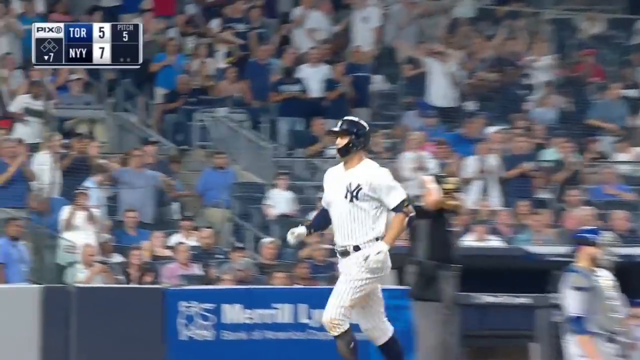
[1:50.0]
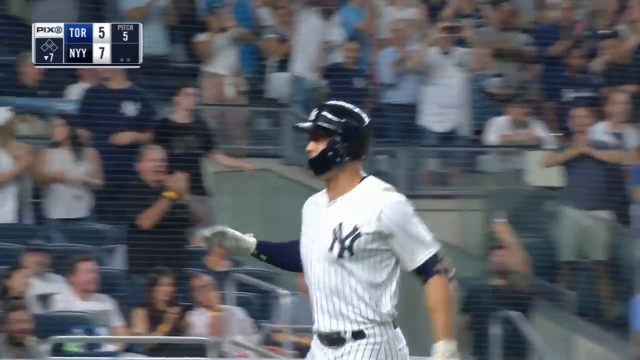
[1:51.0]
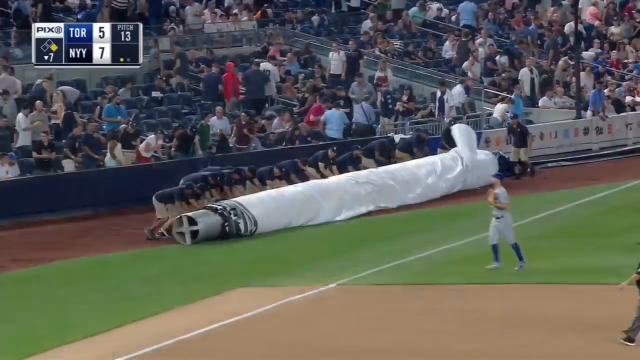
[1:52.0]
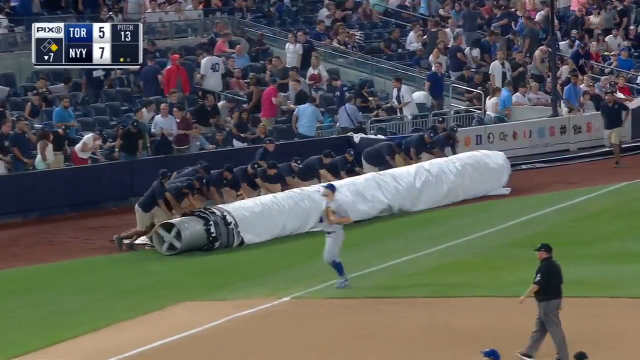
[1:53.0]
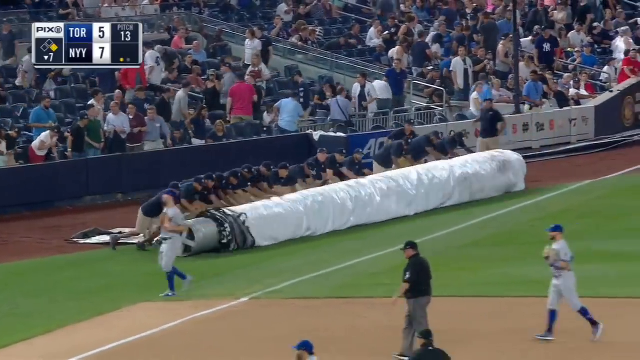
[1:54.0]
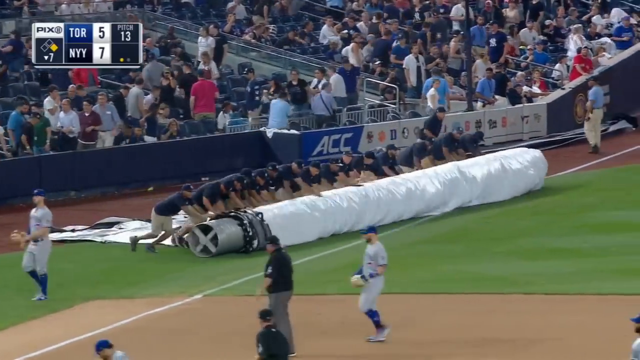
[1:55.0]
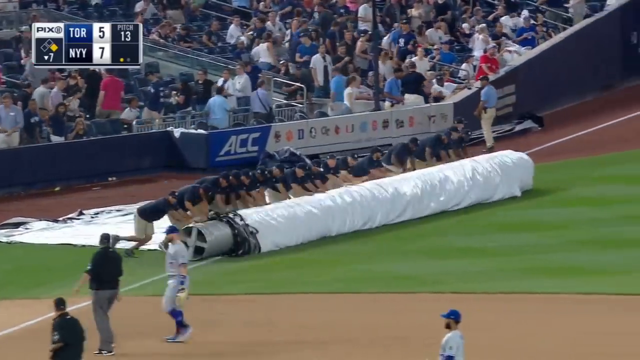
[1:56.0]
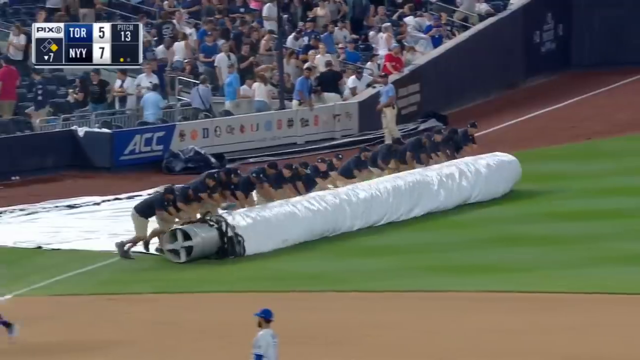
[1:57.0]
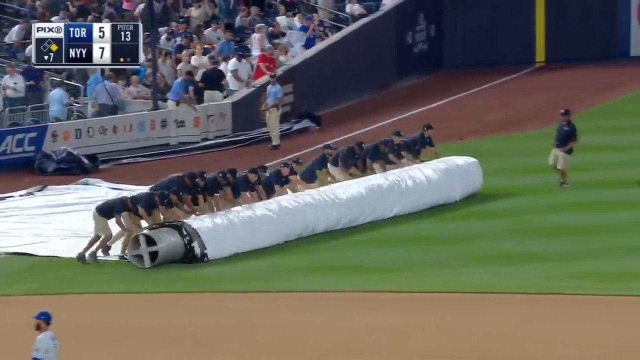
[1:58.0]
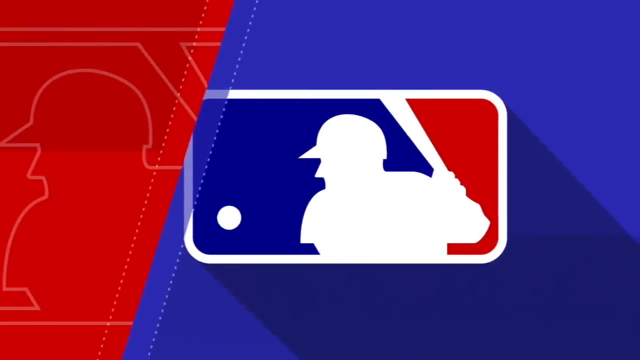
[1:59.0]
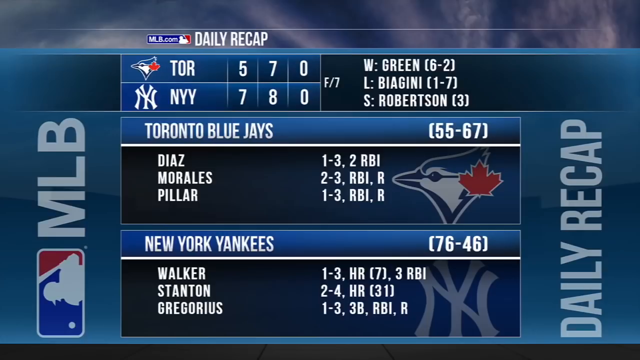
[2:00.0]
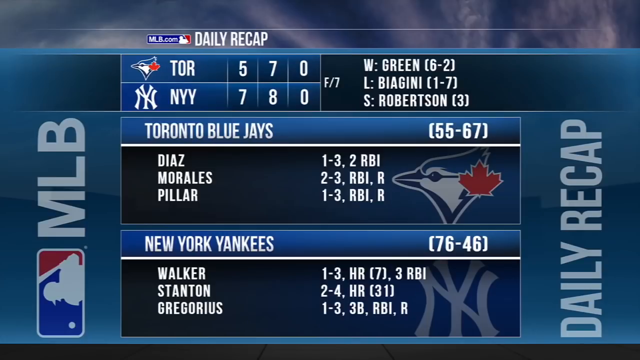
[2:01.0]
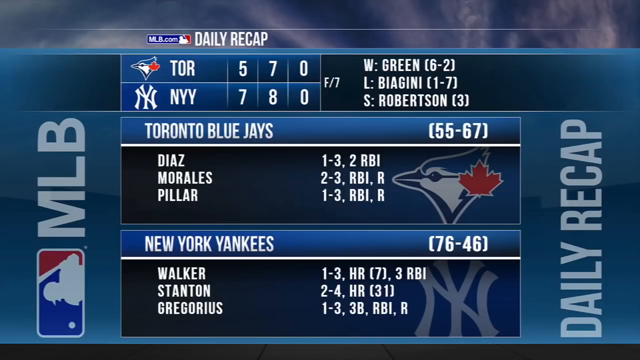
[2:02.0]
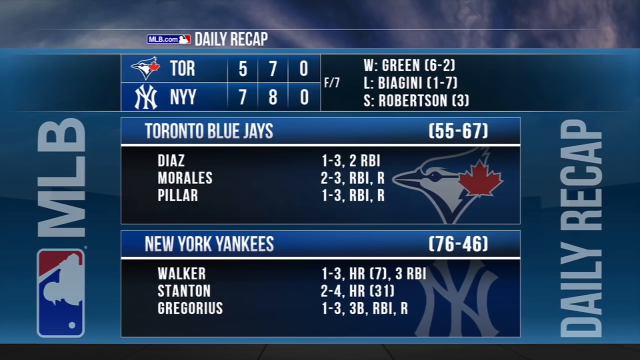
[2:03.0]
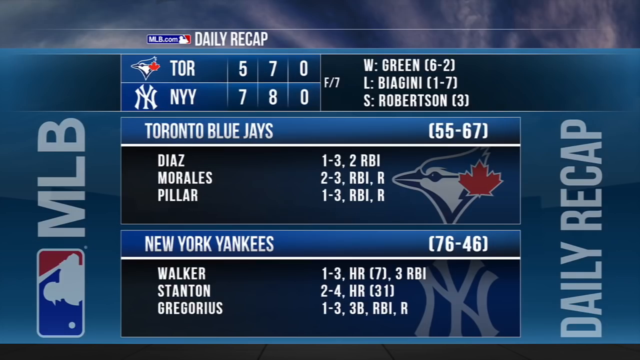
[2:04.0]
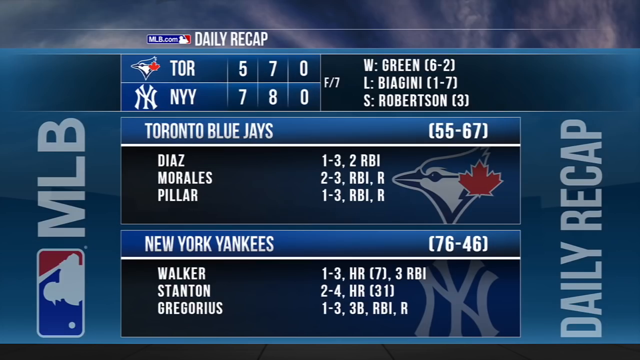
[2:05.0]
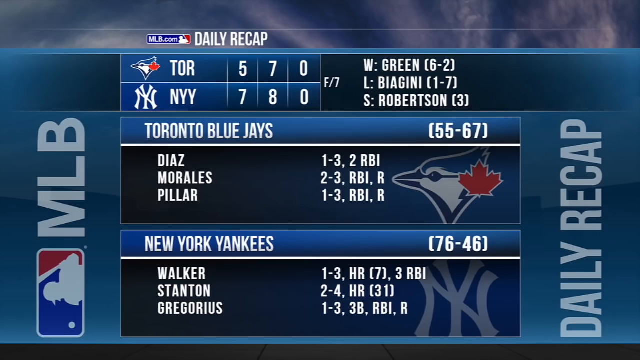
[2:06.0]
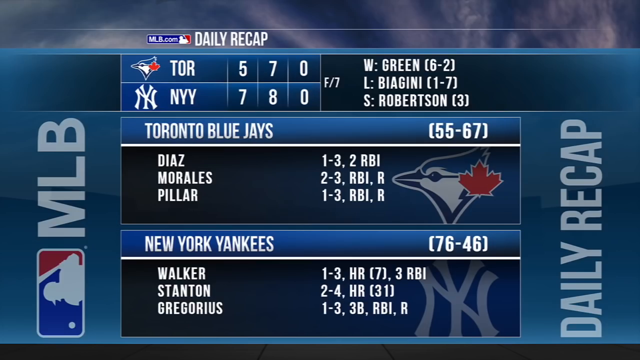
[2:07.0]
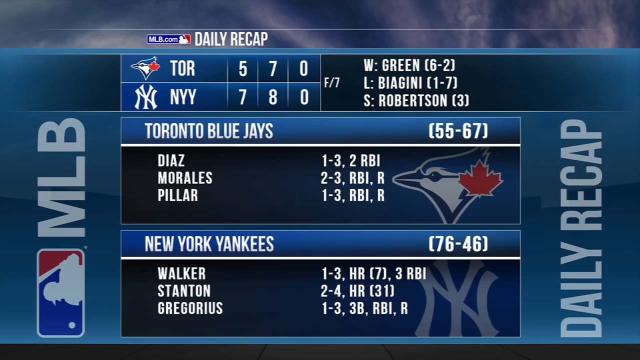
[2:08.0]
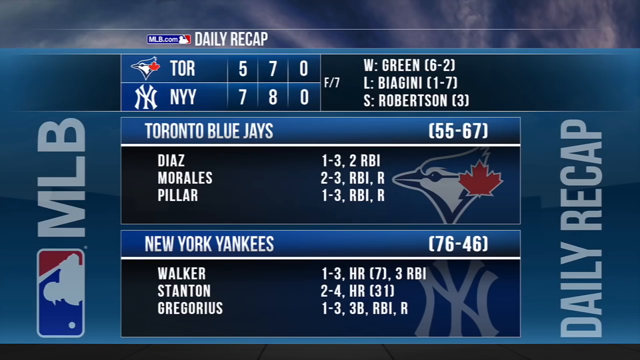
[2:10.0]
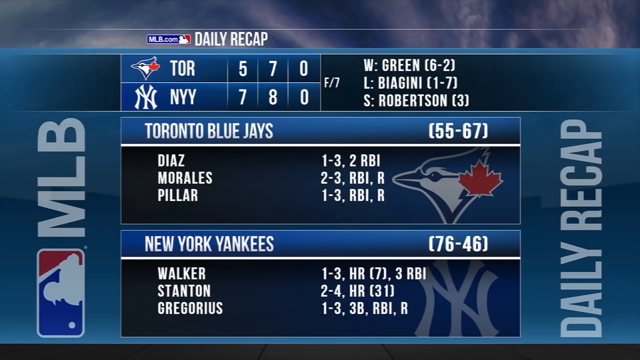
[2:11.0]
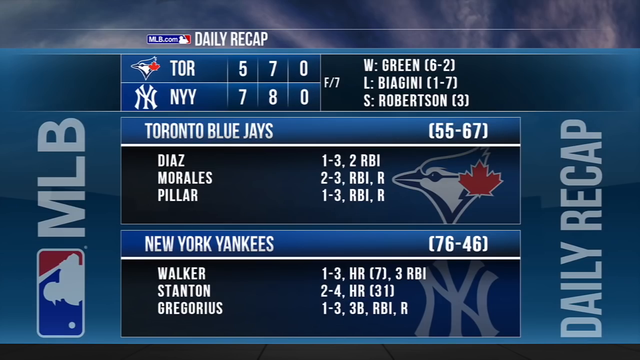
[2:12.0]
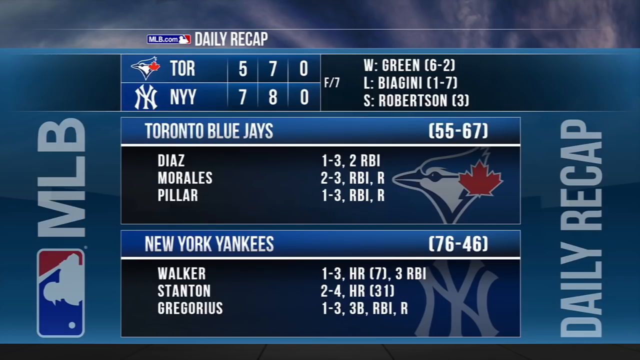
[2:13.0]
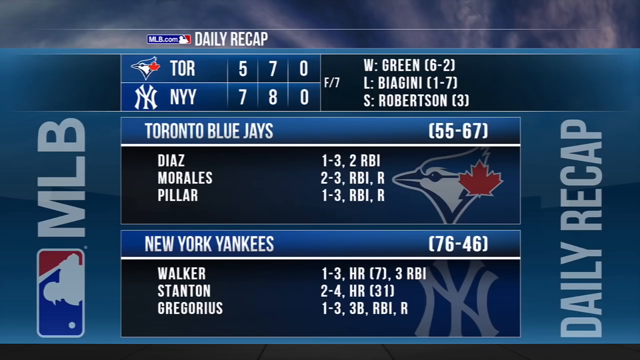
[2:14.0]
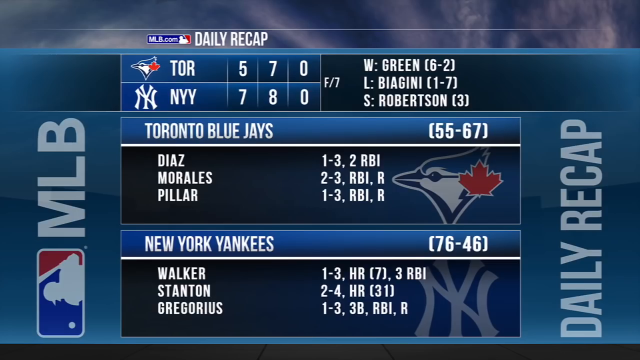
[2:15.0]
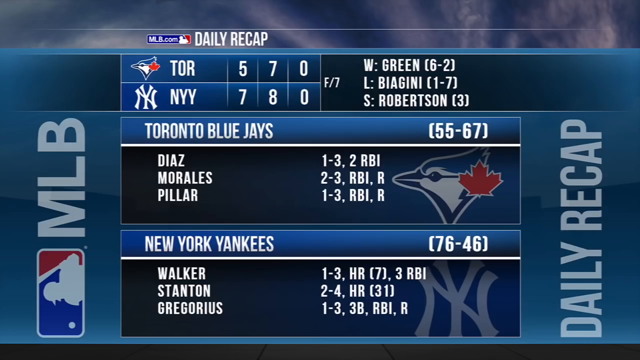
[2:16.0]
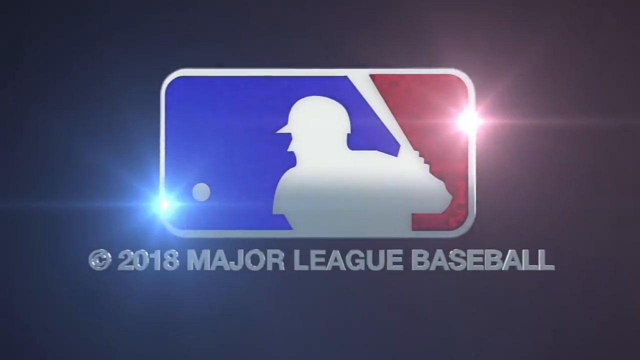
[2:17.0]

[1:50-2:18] The batter finishes his home run and gives a high five to his fellow players. Next, a team of grounds people, in what look like beige shorts, dark blue polo shirts and blue baseball caps, are at the edge of the pitch near a small section of the crowd with a giant roll of material, which is rolled out. A stats screen for the game follows, showing that the New York Yankees have won against the Toronto Blue Jays. It is a blue MLB board with the usual statistics: sections for each inning, the number of home runs and the points scored. To the side are the standout players and their stats, broken down by team, with the Toronto Blue Jays' best players and their stats and, underneath, the New York Yankees' best players and their statistics.